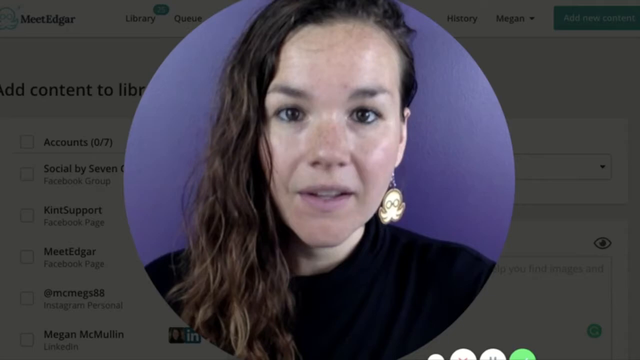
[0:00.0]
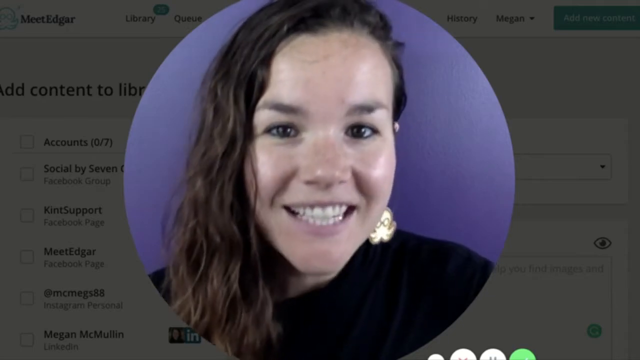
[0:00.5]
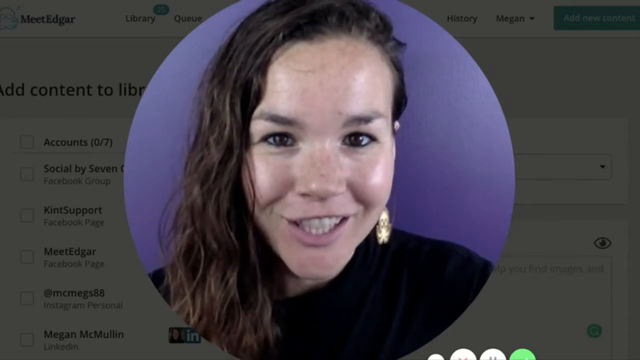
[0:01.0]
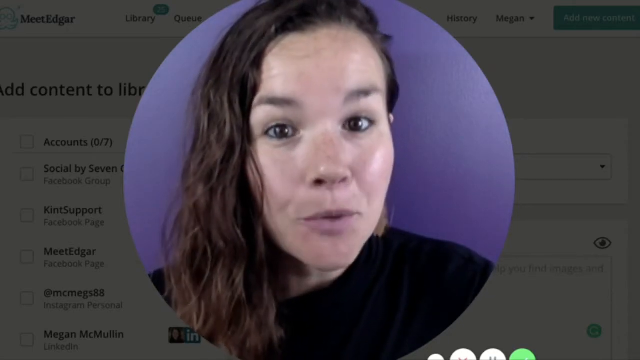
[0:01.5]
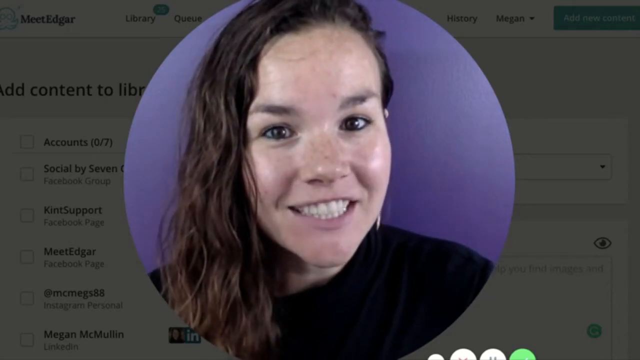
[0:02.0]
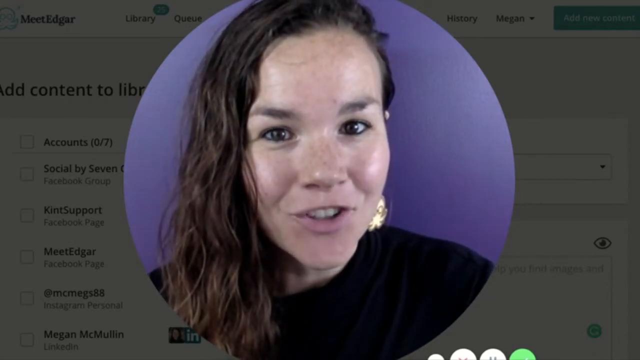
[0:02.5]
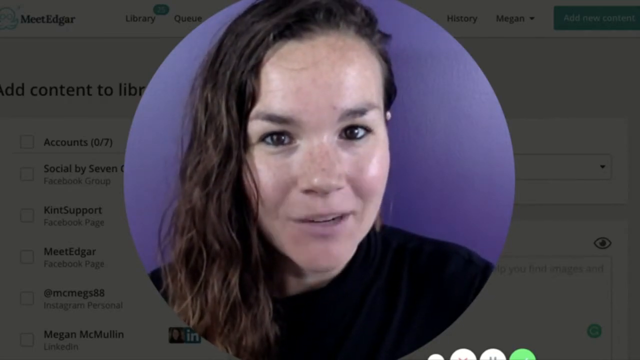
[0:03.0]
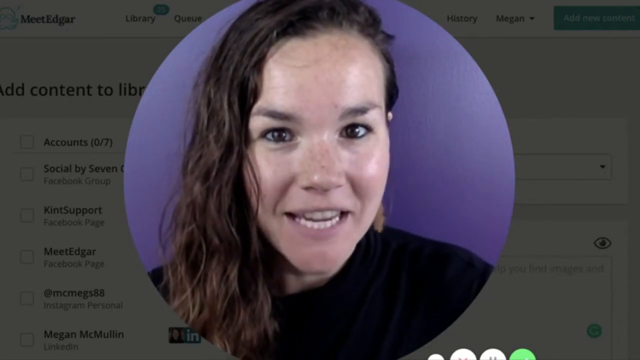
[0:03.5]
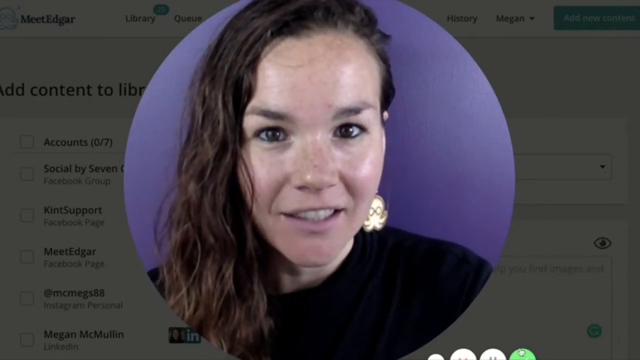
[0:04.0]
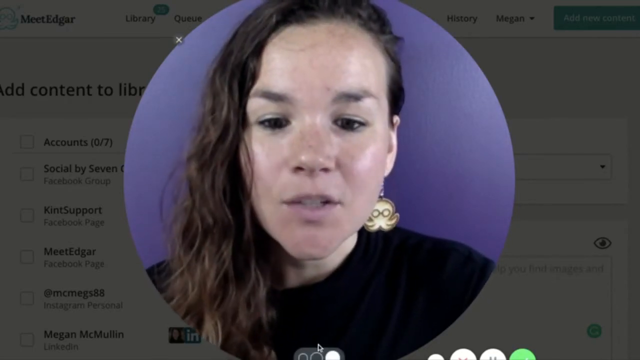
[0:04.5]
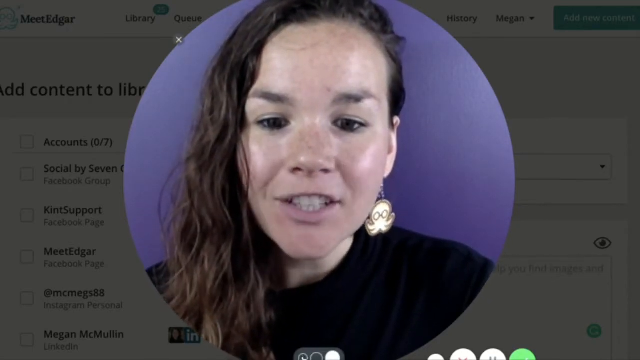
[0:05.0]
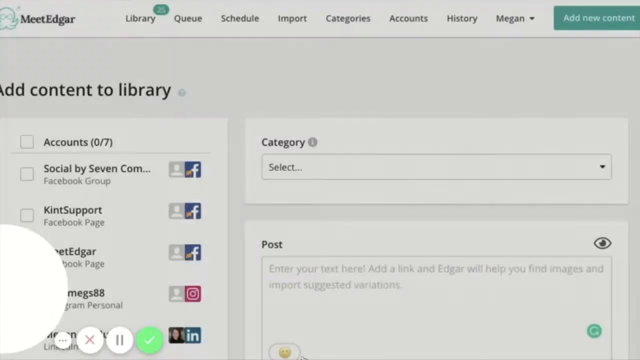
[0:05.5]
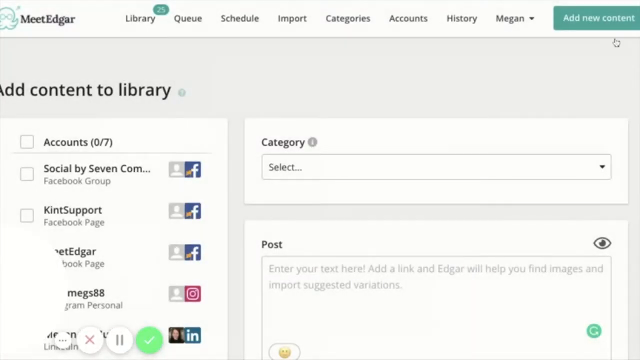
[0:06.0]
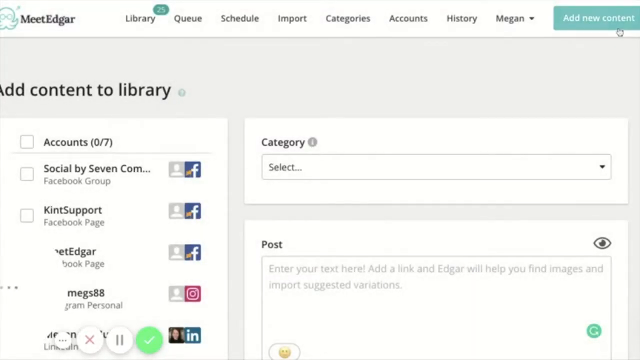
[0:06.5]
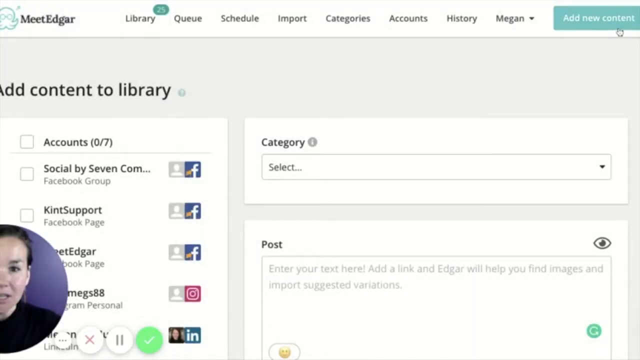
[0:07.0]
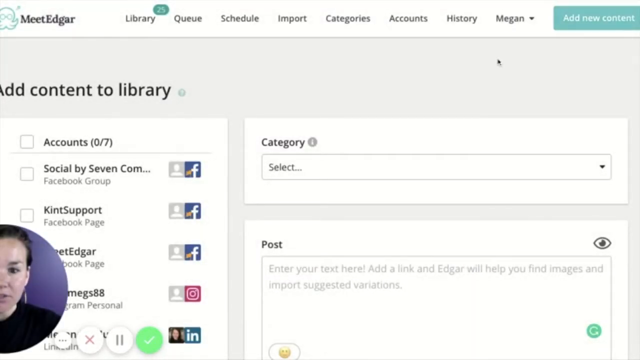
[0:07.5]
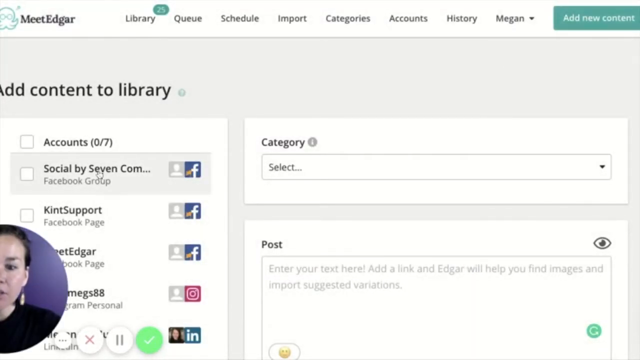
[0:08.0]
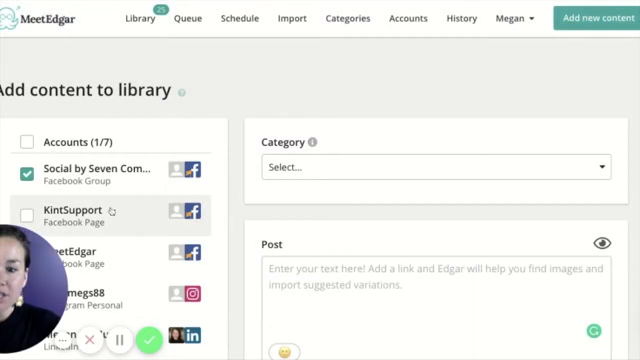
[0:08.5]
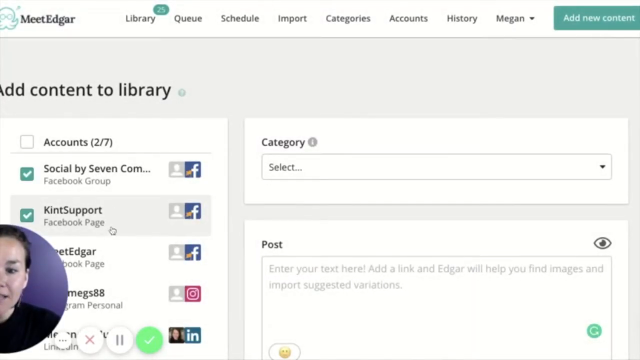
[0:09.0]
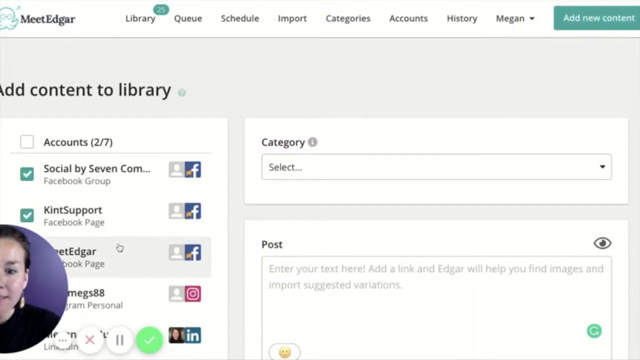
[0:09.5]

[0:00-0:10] What appears to be a video call shows a woman in front of a purple background; she seems to be sharing her screen. The view then cuts to her screen, where she ticks off items on some checklists one after another; they look like they show Facebook icons. Text on the screen reads "add content to library." The checklist appears to be for selecting items to add to the library, and she appears to be showing people how to do this on the video call.